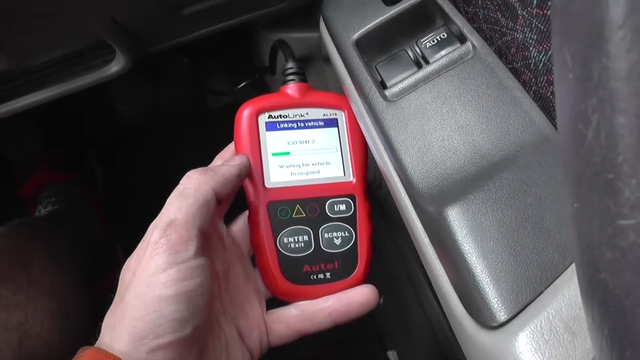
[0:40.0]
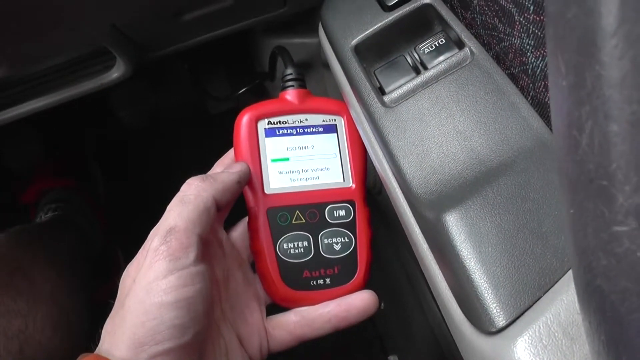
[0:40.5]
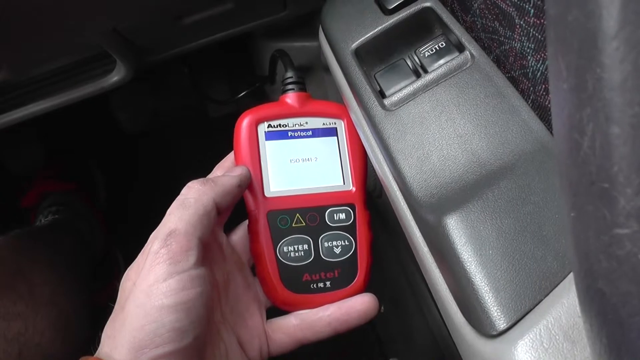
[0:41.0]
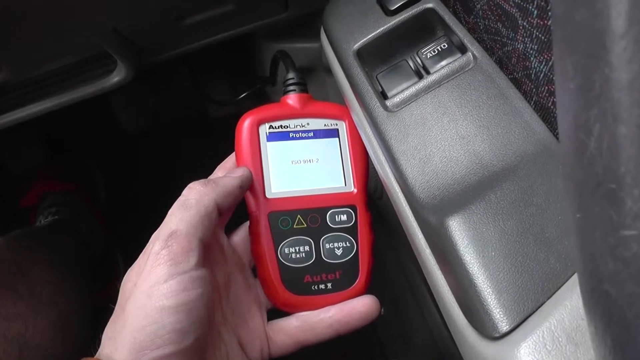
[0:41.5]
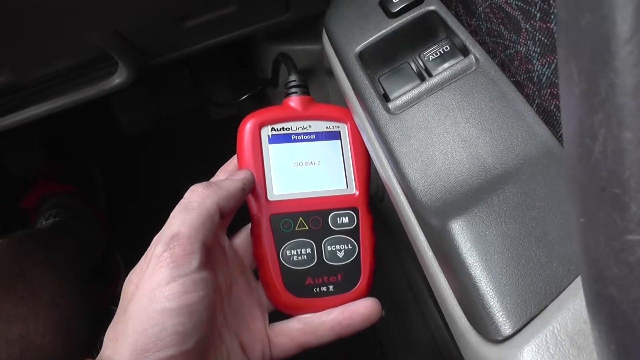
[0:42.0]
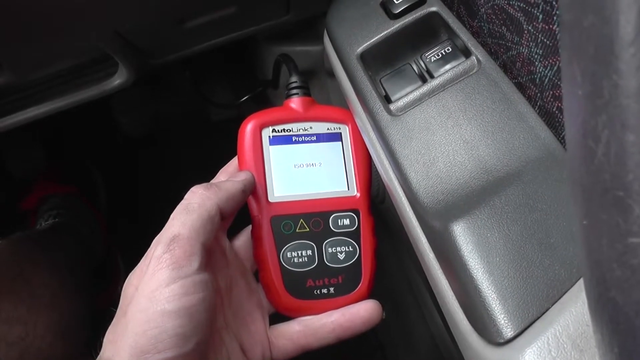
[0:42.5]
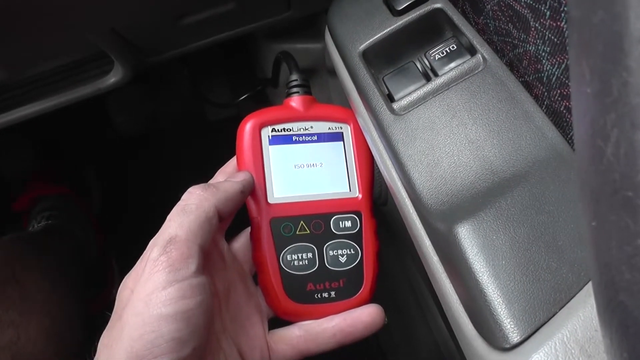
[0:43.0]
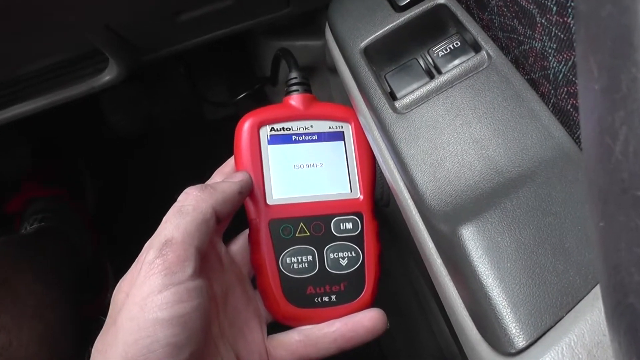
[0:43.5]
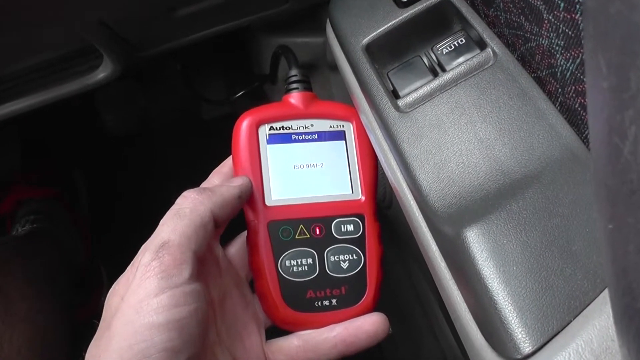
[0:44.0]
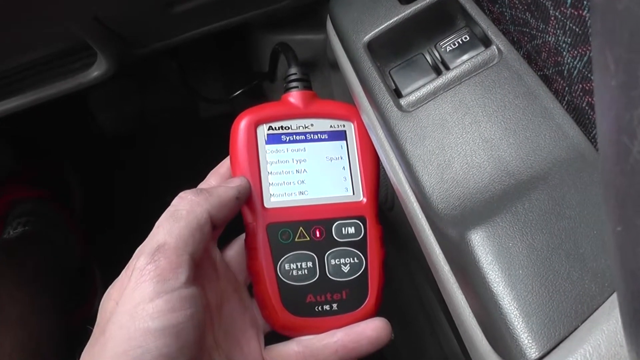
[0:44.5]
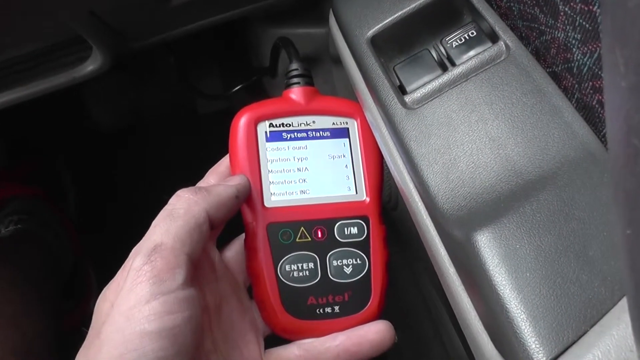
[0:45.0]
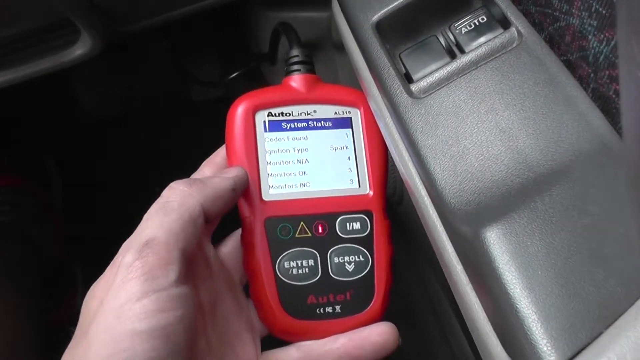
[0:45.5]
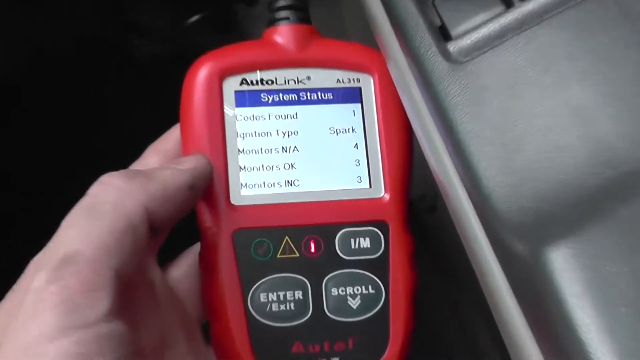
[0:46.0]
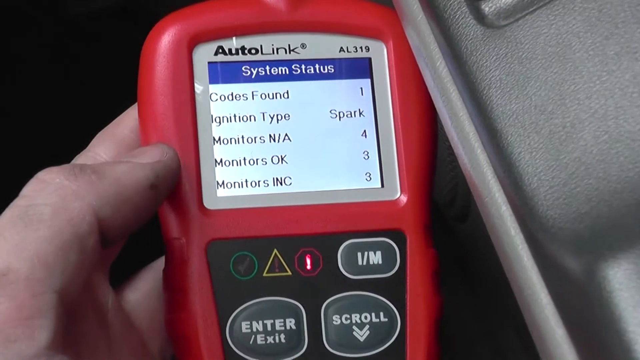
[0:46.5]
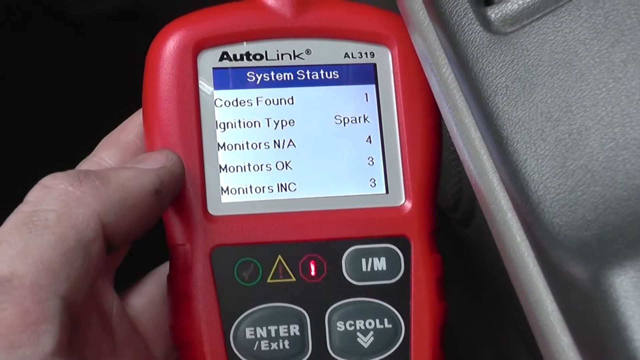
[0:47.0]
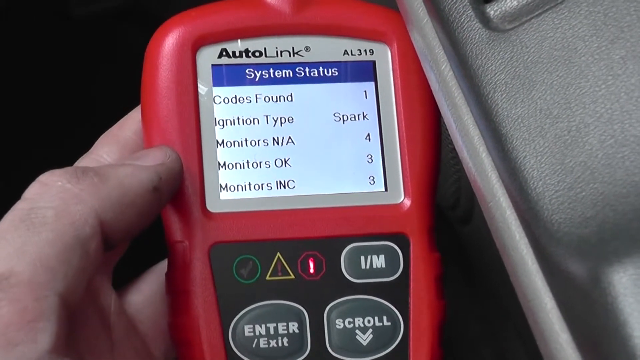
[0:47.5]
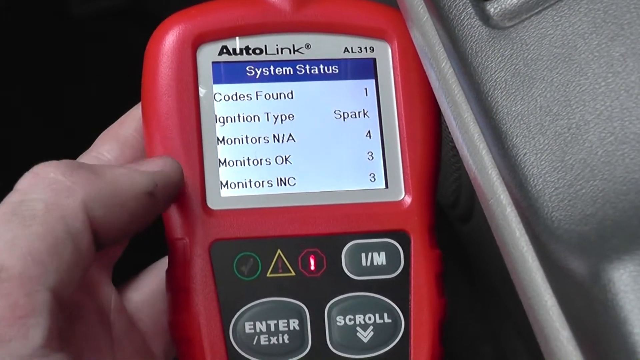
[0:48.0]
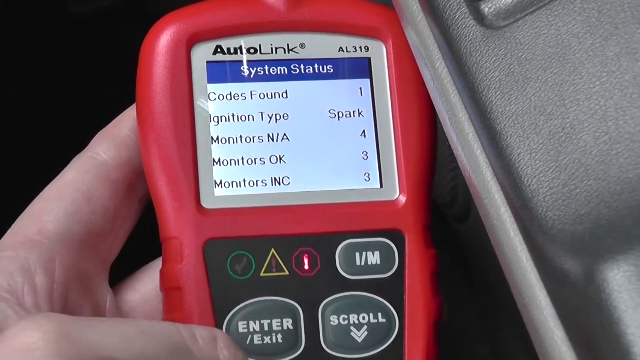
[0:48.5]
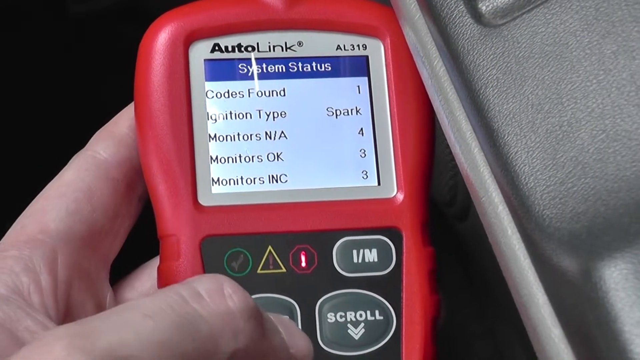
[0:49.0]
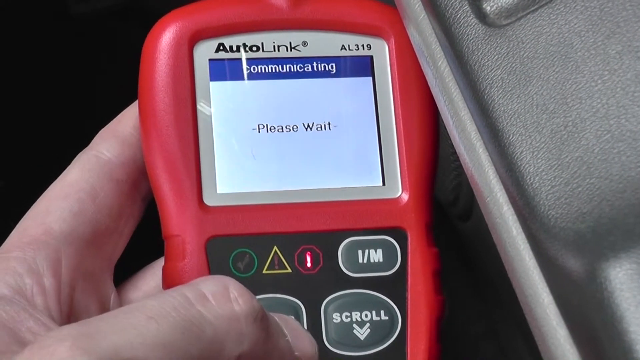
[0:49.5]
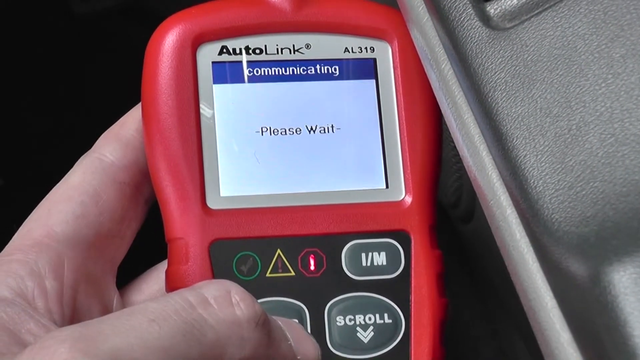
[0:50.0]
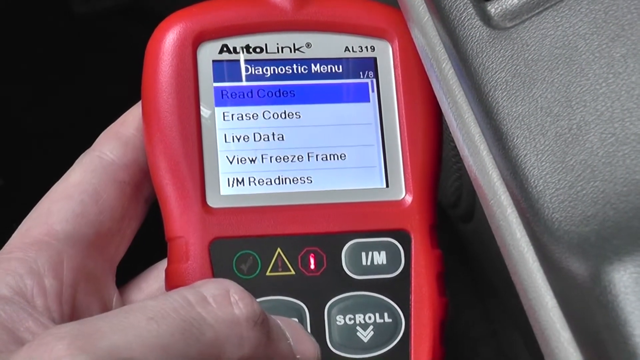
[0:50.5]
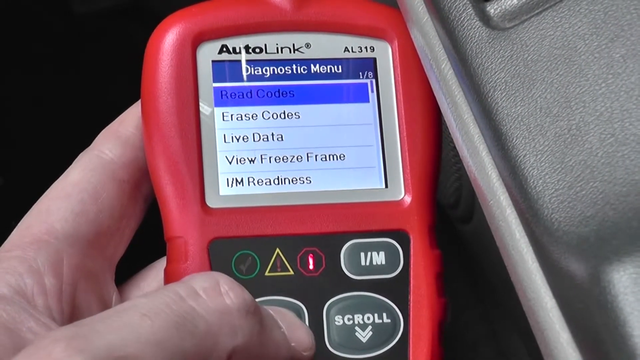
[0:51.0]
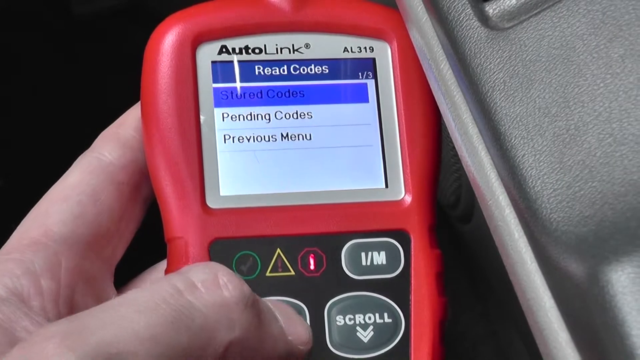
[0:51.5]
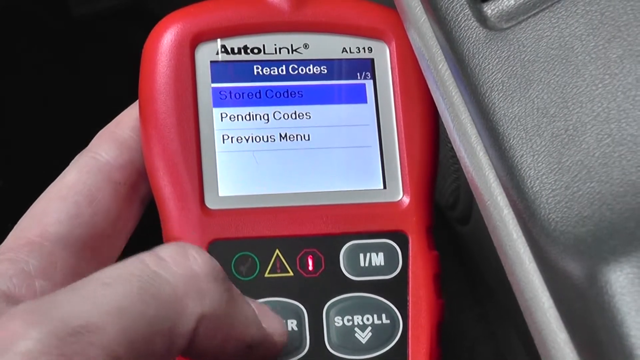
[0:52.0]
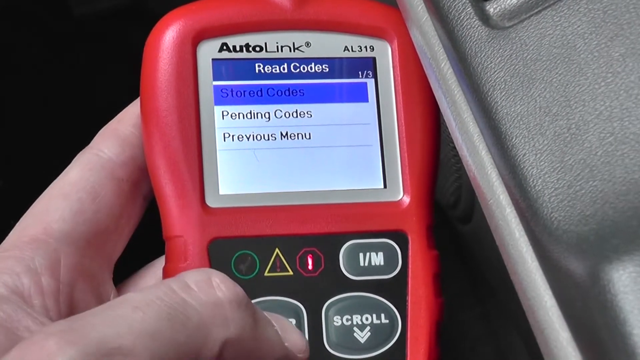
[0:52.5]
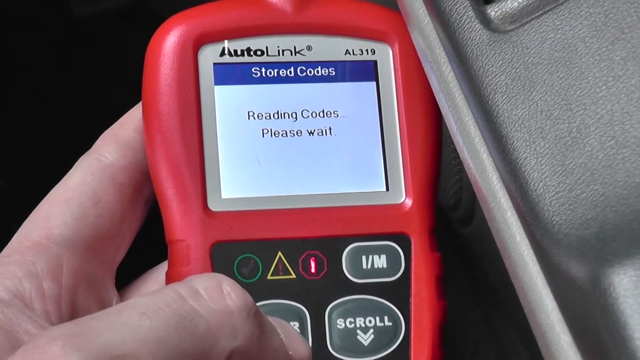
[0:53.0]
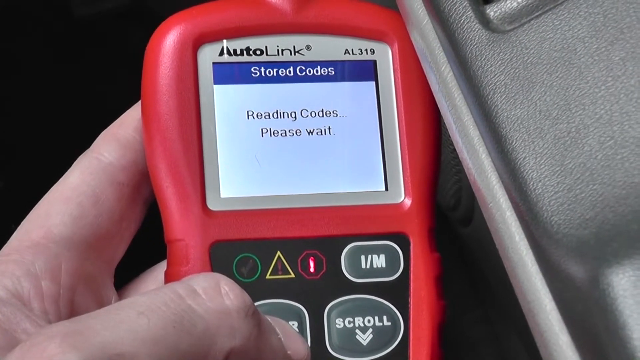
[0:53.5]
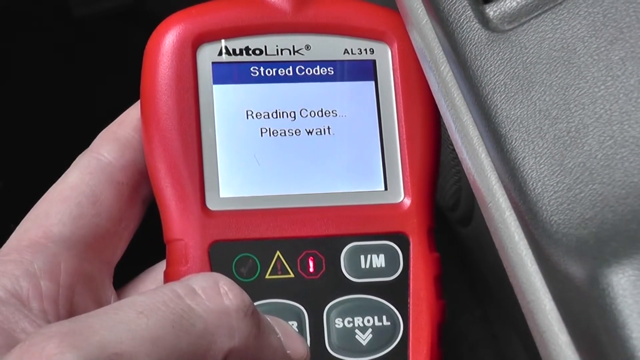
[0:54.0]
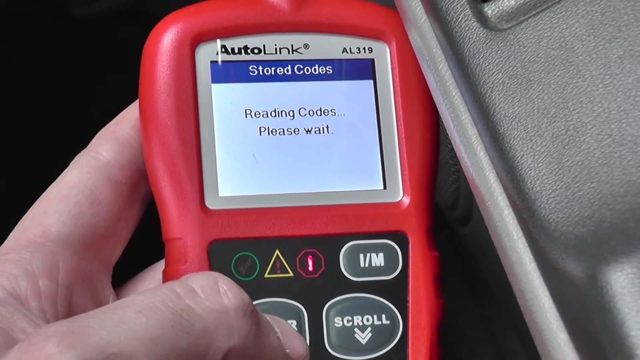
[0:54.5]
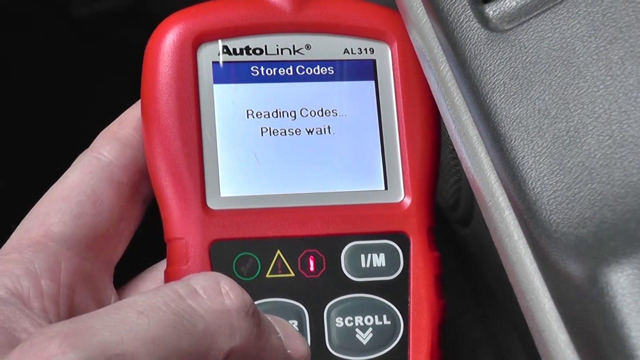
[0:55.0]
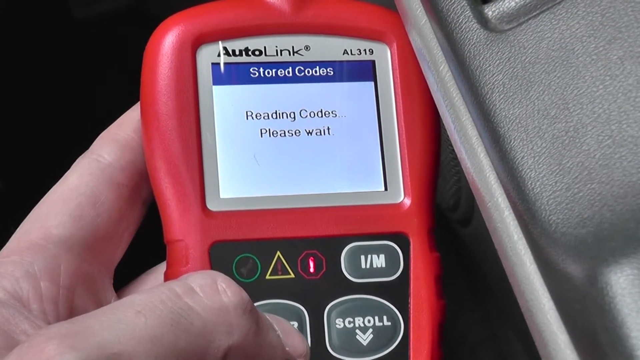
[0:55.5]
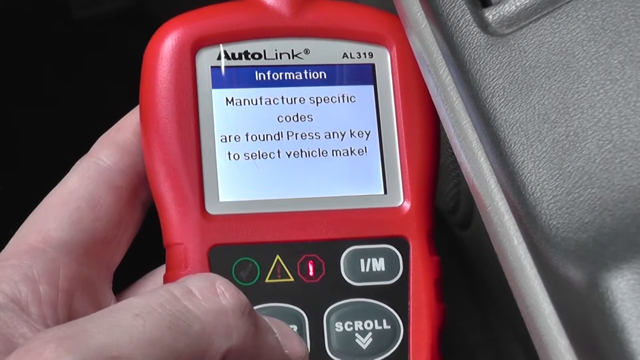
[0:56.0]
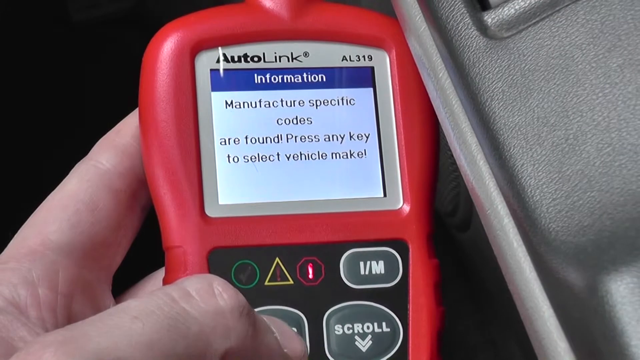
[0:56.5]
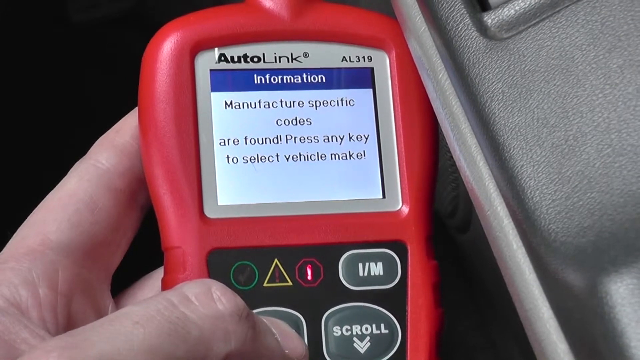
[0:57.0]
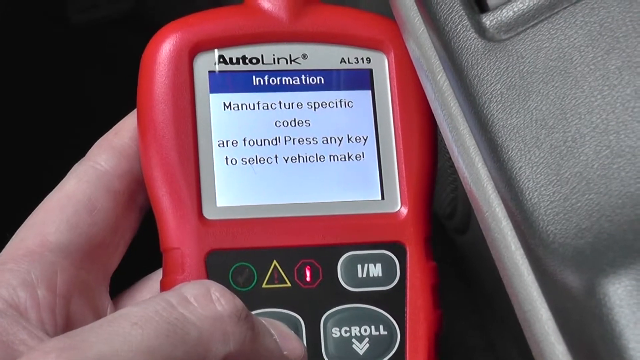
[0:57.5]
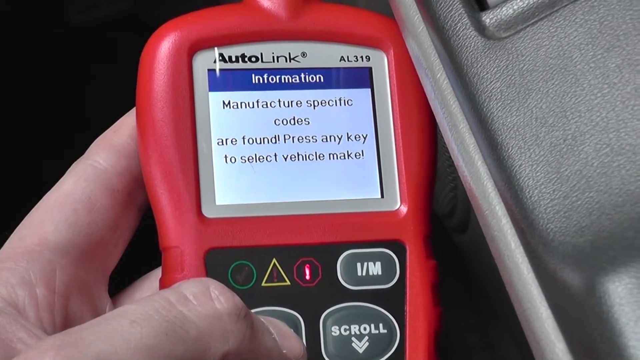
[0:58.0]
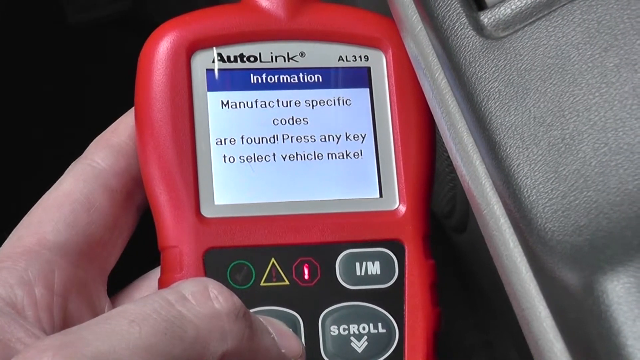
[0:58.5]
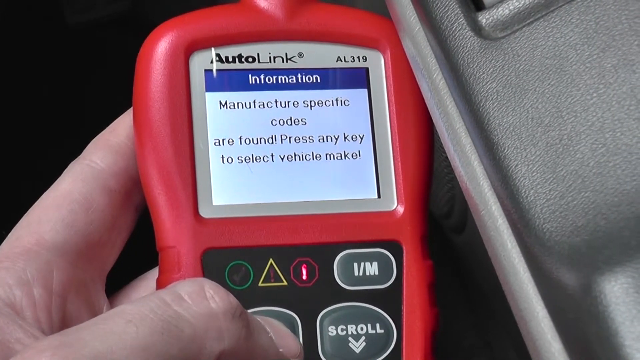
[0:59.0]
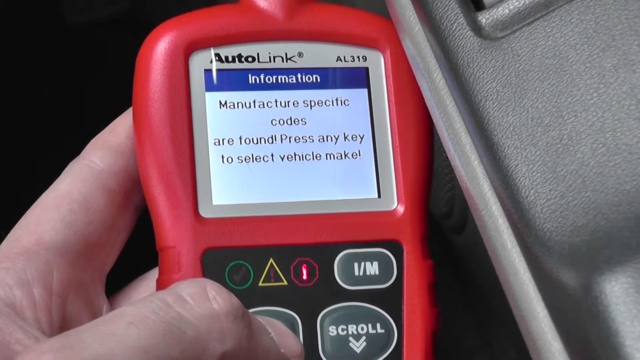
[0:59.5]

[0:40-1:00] The camera zooms in on the diagnostic device, which the mechanic holds in his fingers with the palm of his left hand, his thumb touching the side of the device. A cord from the top of the device is connected to an outlet under the dashboard on the driver's side. The camera zooms in as the screen changes, and toward the top the words "system status" appear on a purple rectangular bar. Zooming in further shows the codes: "codes found" with the number "1" next to it, "ignition type" with "spark" next to it, then "monitors" and, beneath it, "monitors okay". On the device's control panel a red circle is lit up, possibly indicating a problem; up close it looks more like a red stop sign outline with a red and white line inside. The mechanic pushes the enter button and the screen changes to show "stored codes" near the top and "reading codes, please wait" beneath. The screen changes again to "information" at the top with "manufacturer specific codes are found, press any key to select vehicle make" beneath. With his left thumb still on the enter button, different car makes pop up on the screen.